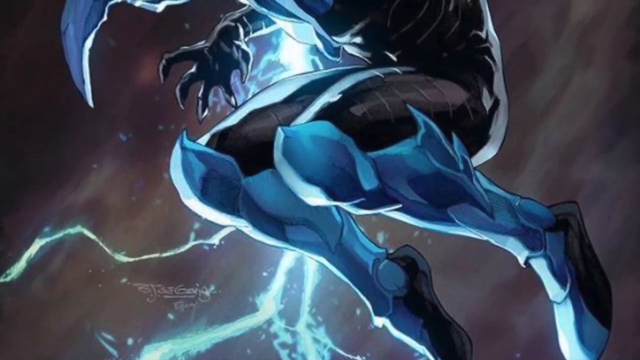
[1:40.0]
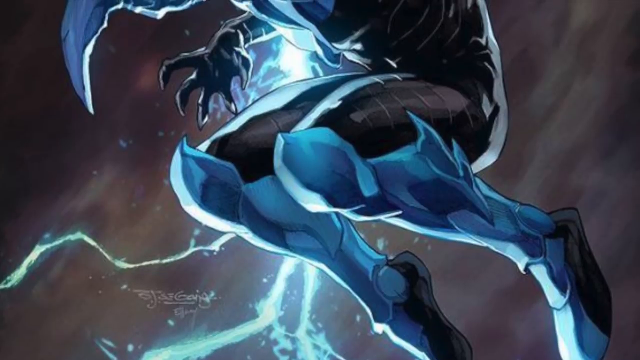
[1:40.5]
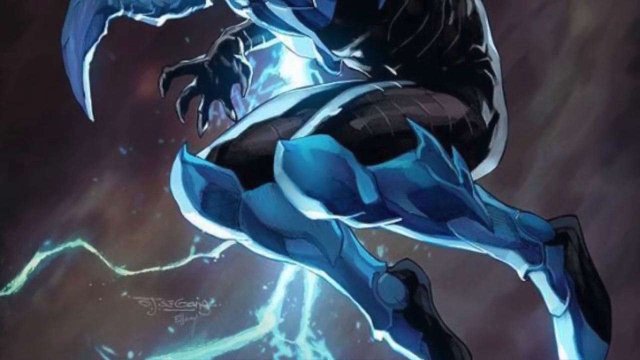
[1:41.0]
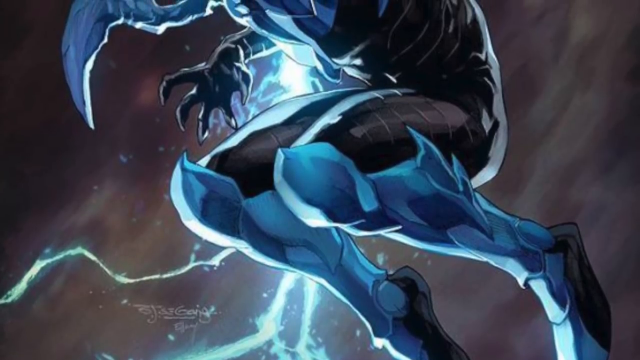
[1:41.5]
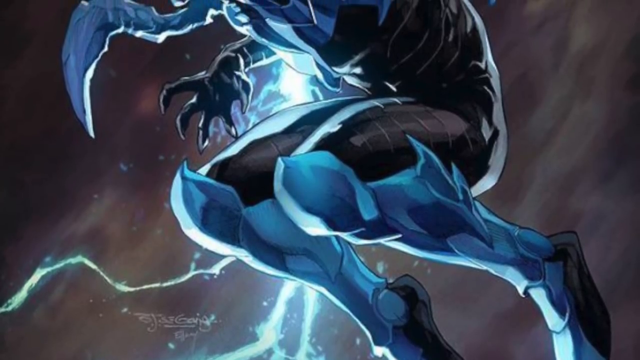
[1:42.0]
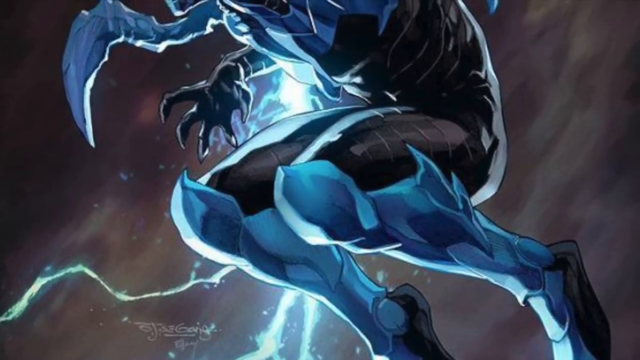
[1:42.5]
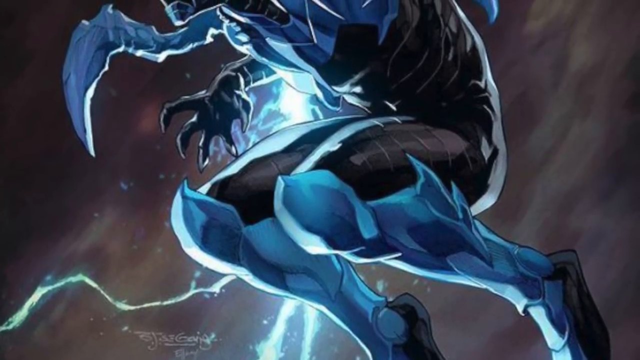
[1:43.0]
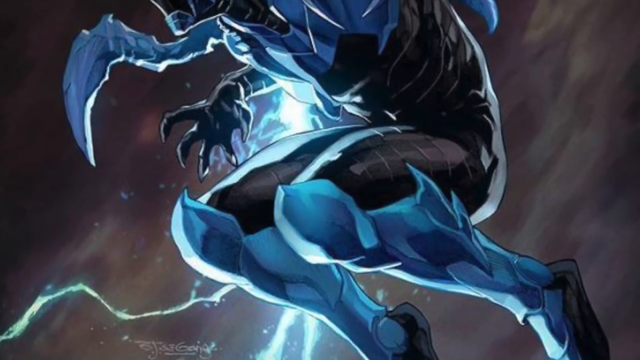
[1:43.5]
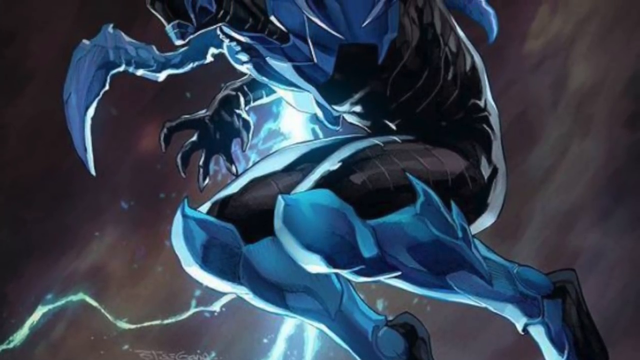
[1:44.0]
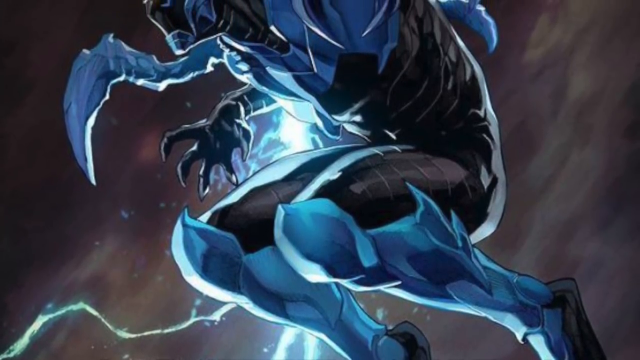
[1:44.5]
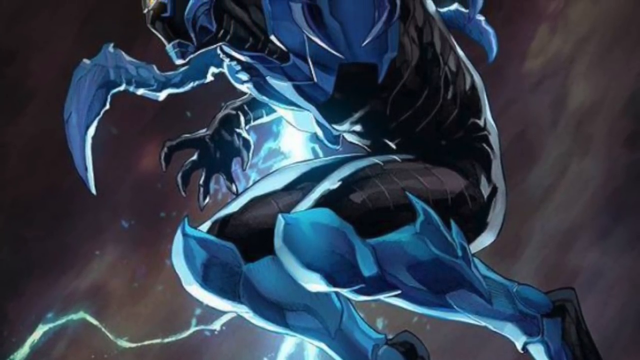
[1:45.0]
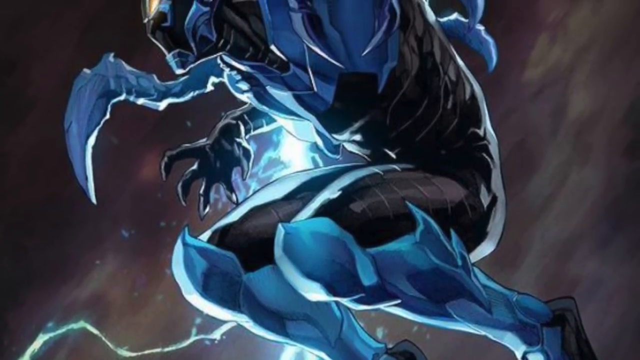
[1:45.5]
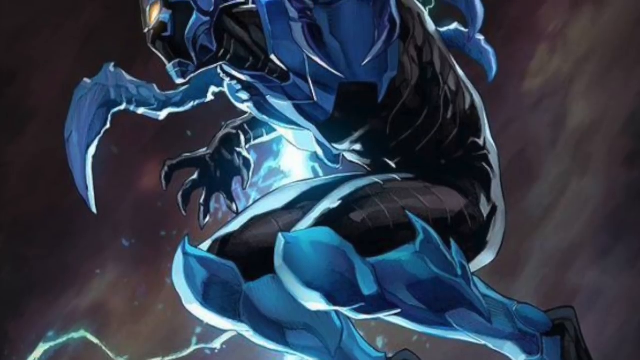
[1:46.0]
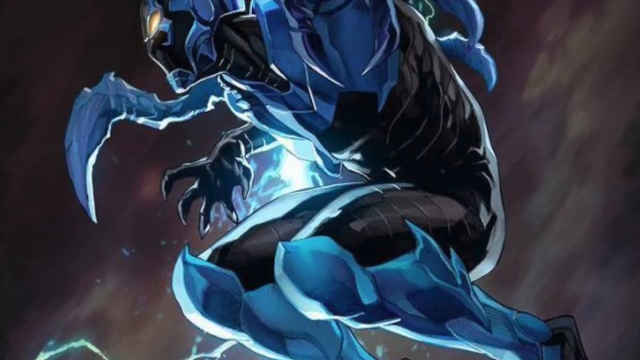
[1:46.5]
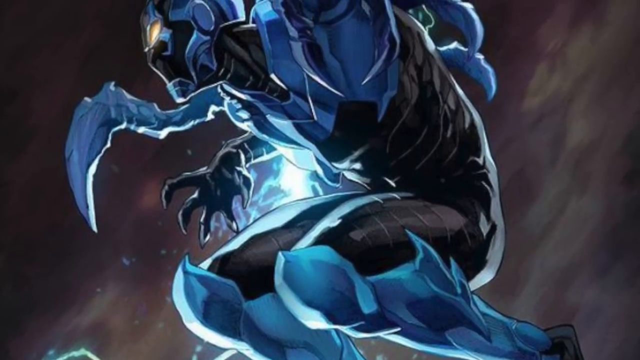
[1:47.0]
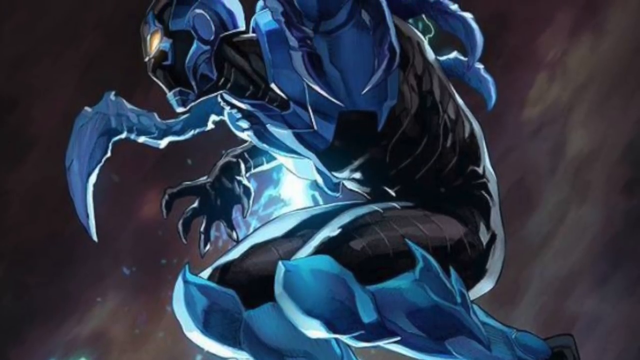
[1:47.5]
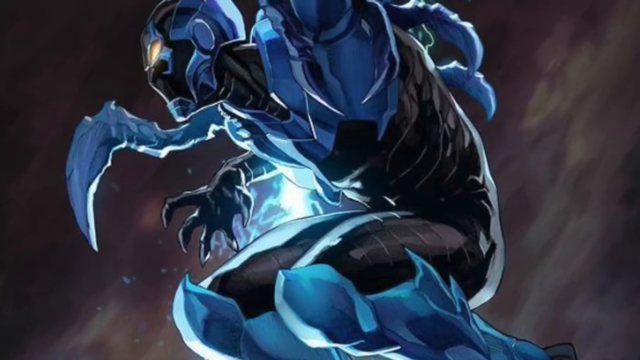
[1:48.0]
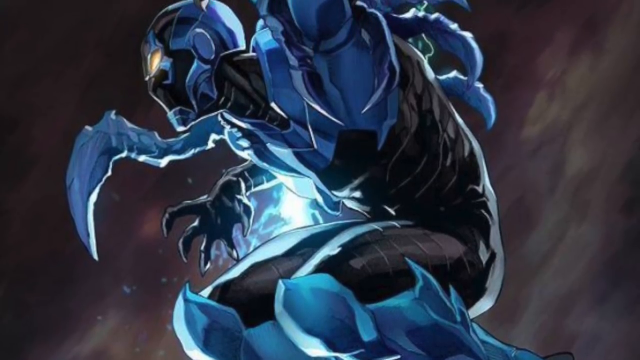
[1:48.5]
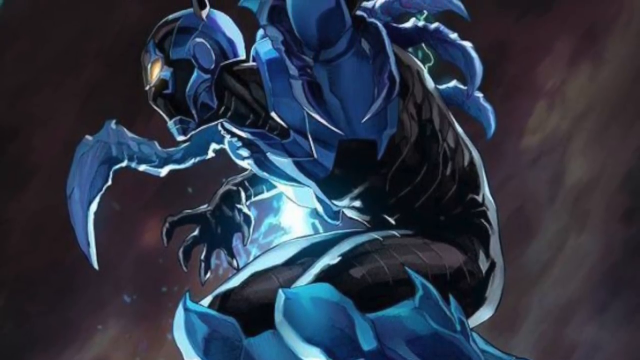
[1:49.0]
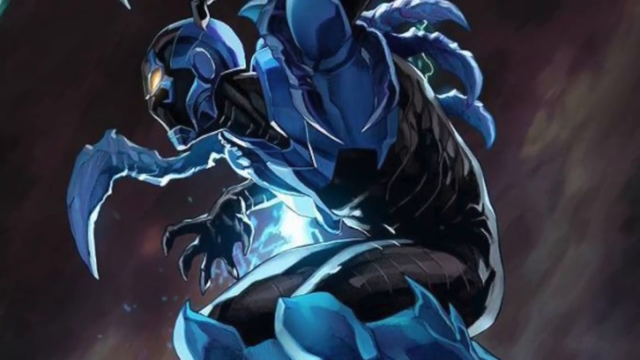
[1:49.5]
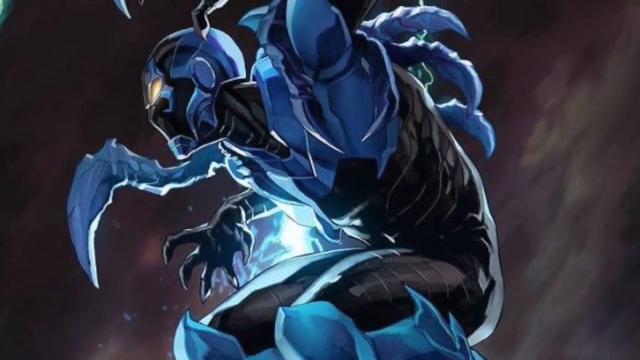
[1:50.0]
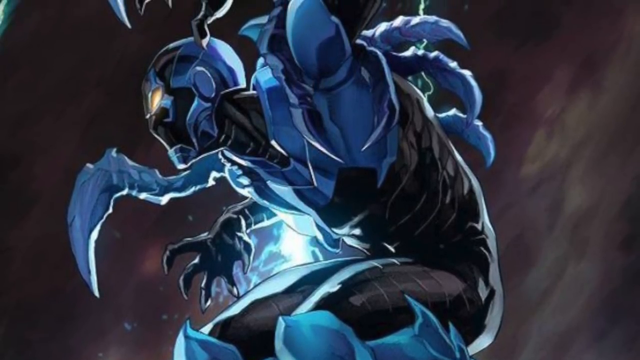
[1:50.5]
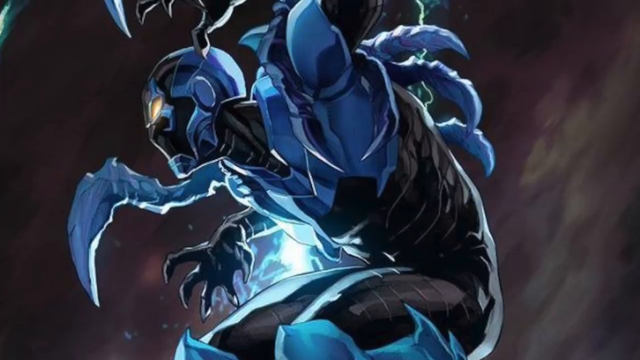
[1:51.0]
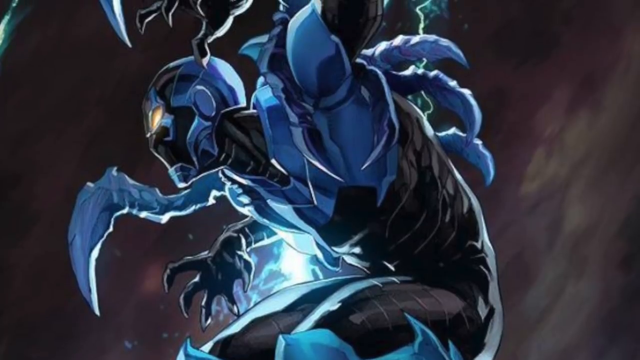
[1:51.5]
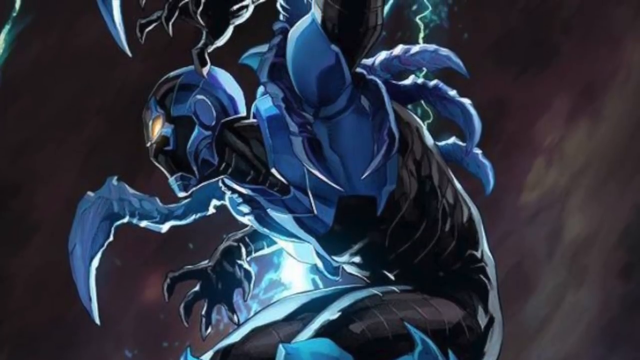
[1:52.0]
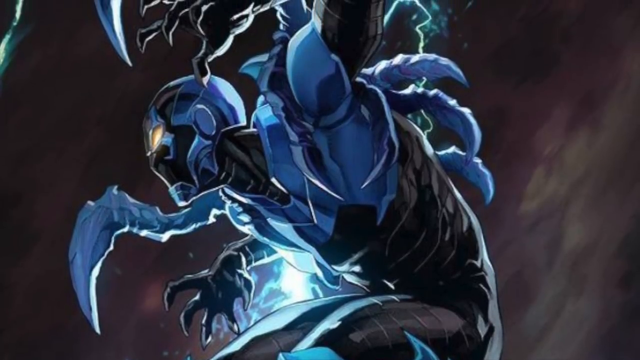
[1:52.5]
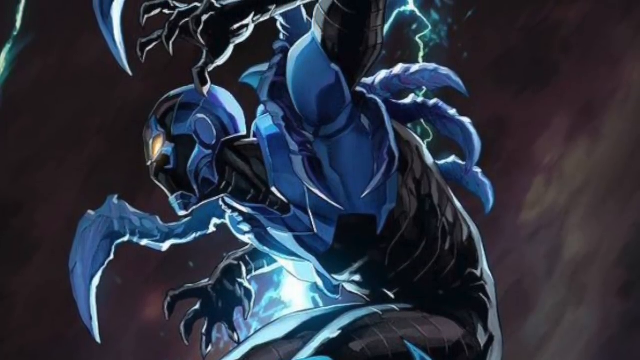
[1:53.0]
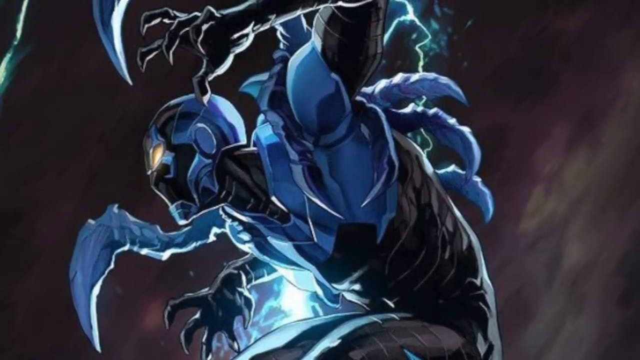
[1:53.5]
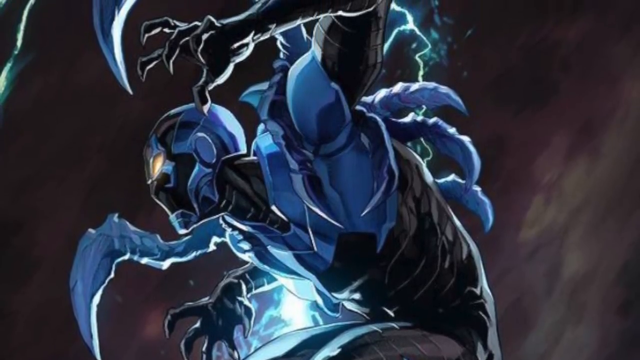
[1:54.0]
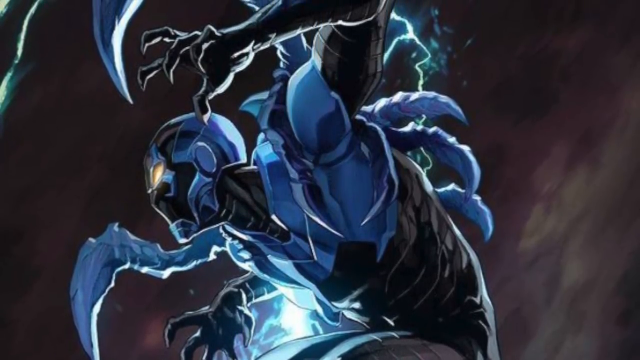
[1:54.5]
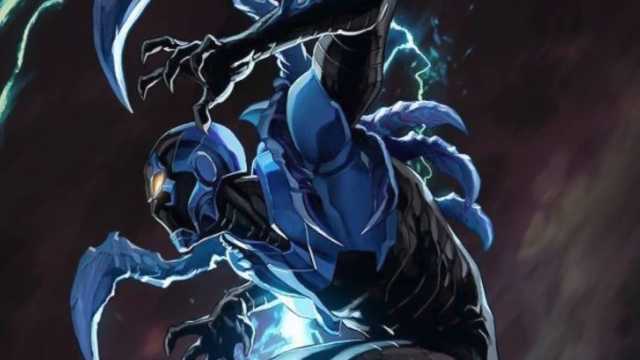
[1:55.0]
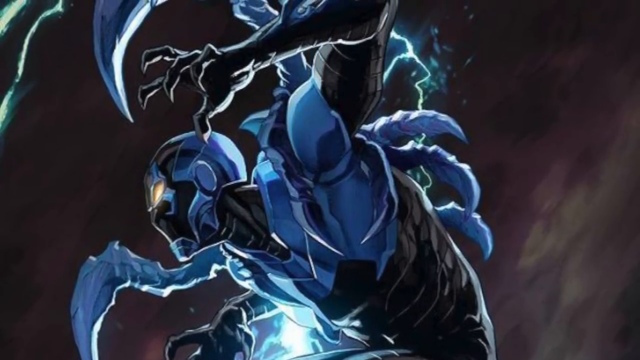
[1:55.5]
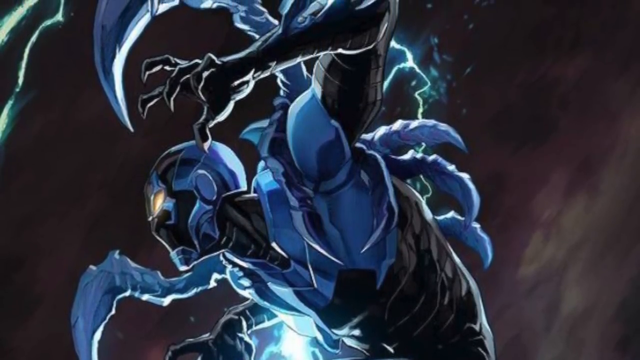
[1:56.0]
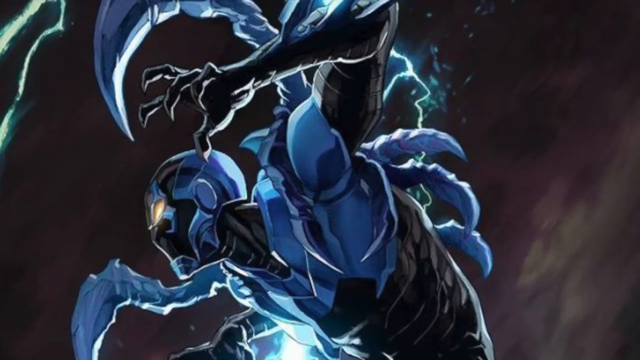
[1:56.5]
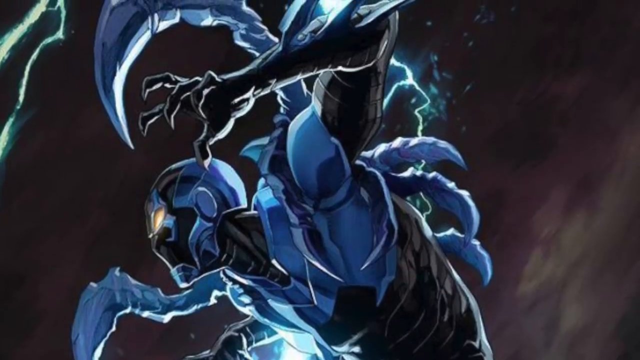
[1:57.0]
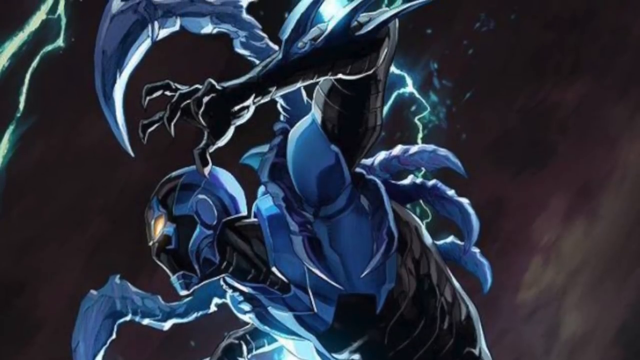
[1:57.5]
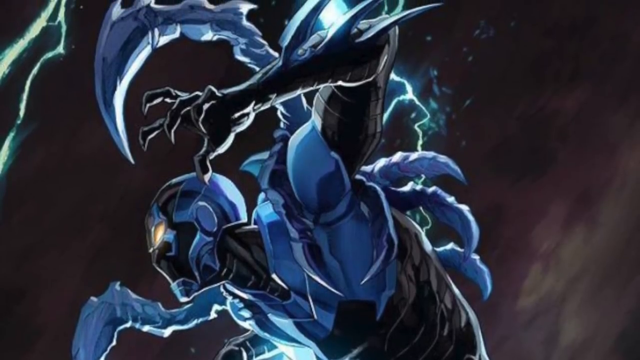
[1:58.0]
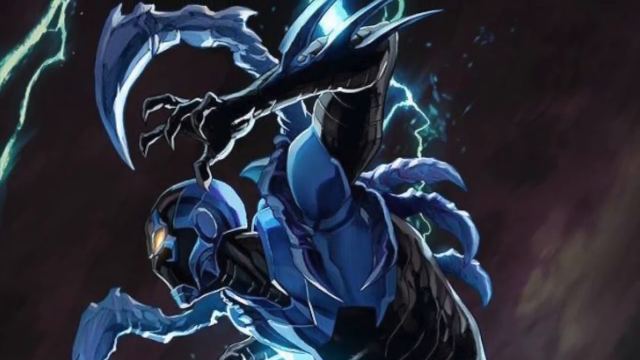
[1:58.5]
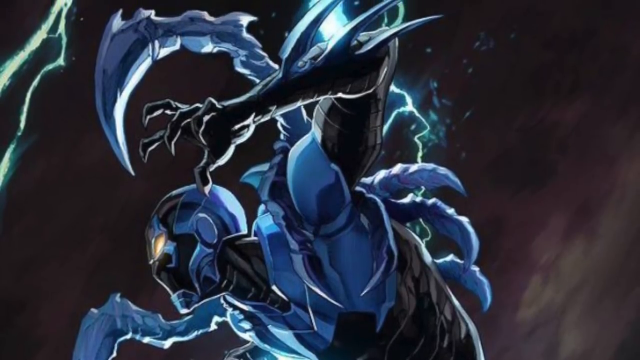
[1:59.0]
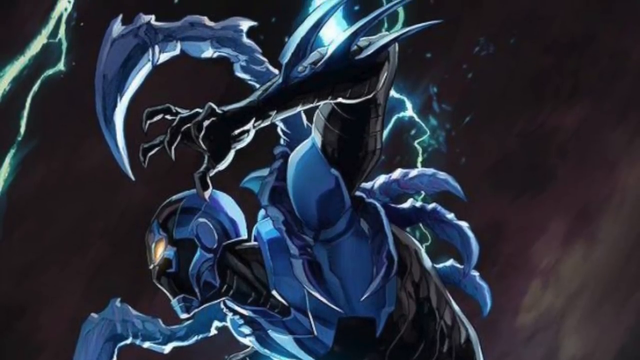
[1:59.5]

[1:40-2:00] The shot begins on the legs of the cyan and black character, and the camera moves up until the head and arms are visible. This appears to be the same character seen earlier, in different animated styles. He looks menacingly towards something in the distance, in a setting that resembles space, and a bolt of lightning is behind him. His hand is in a claw-like position as if he is charging forwards, and he has almost a scorpion tail coming out of his body, made of the same material as his suit. He is charging towards something, and almost three claws come out of his back, also in the same suit style. The character looks quite menacing and powerful.